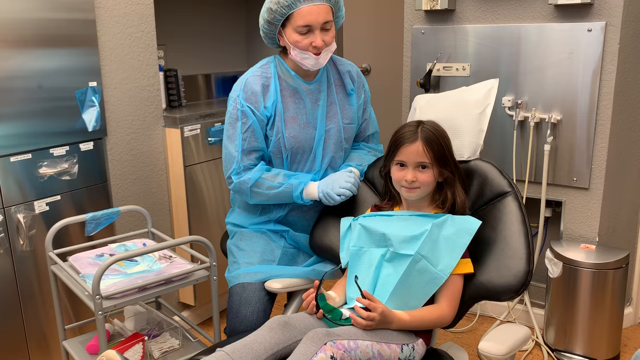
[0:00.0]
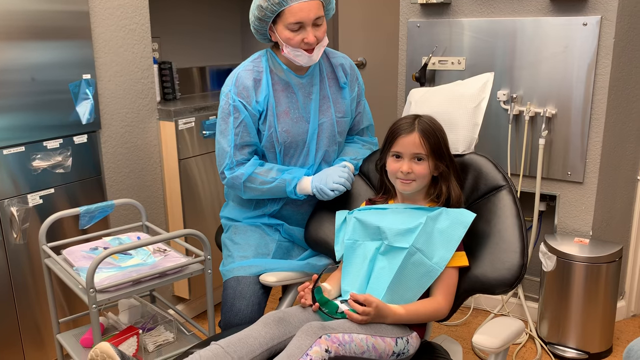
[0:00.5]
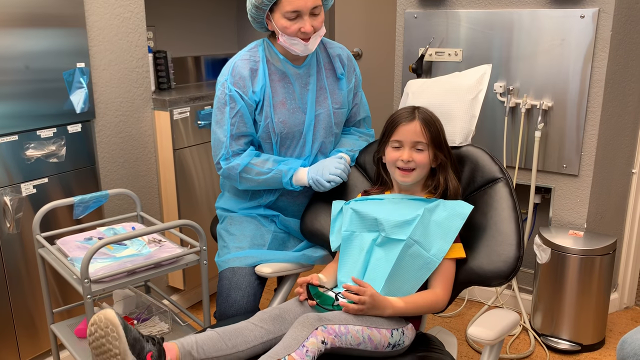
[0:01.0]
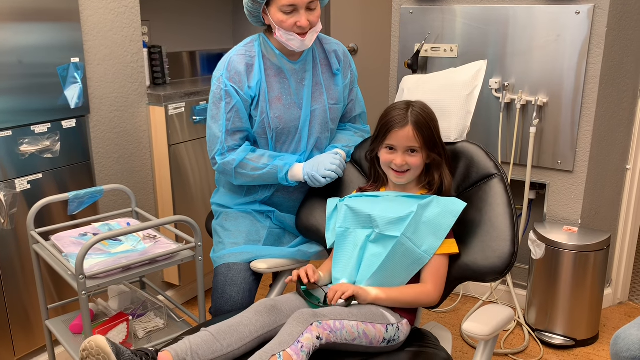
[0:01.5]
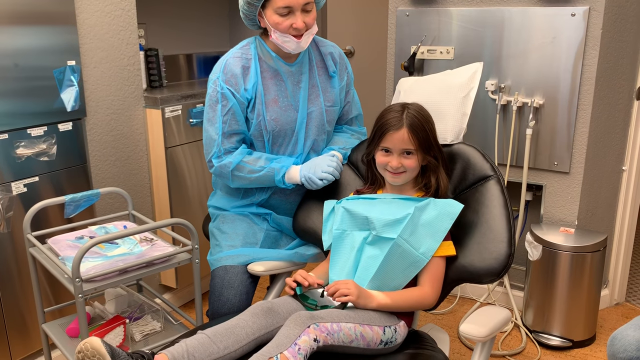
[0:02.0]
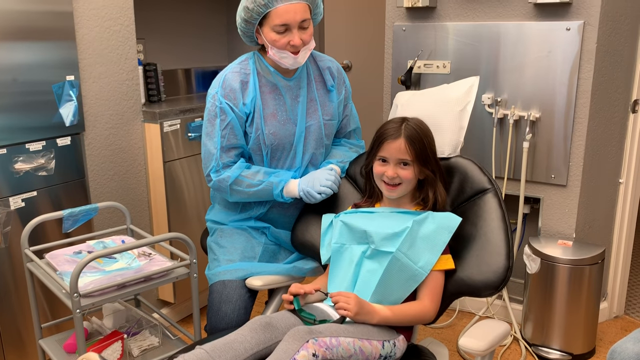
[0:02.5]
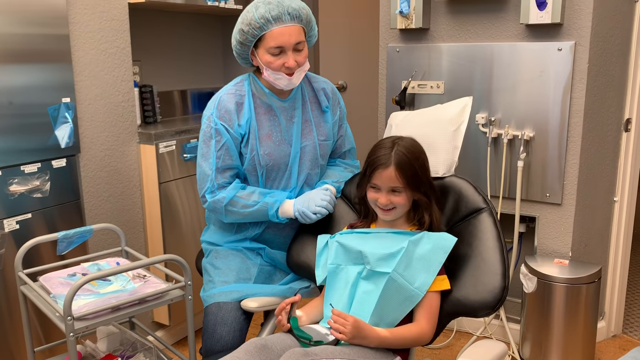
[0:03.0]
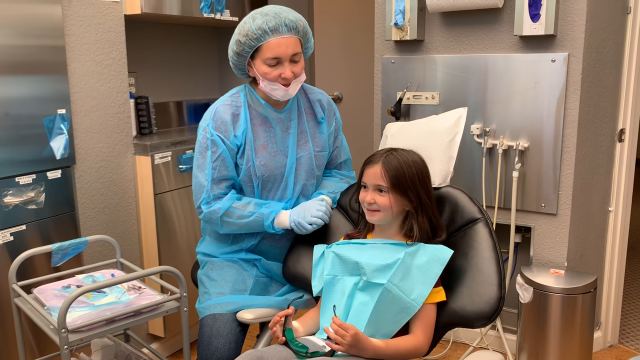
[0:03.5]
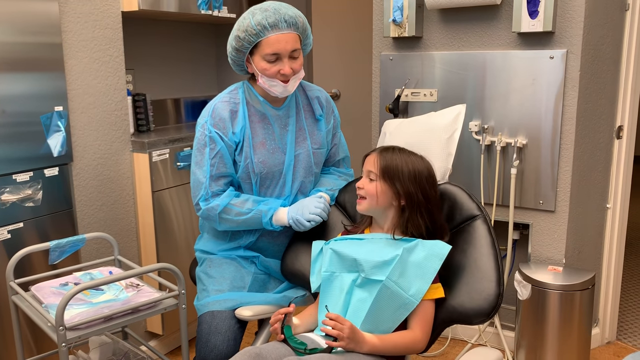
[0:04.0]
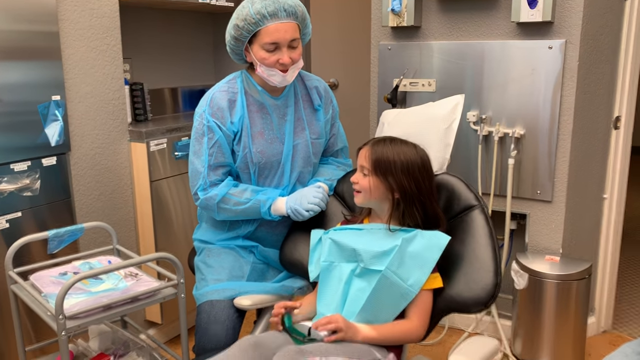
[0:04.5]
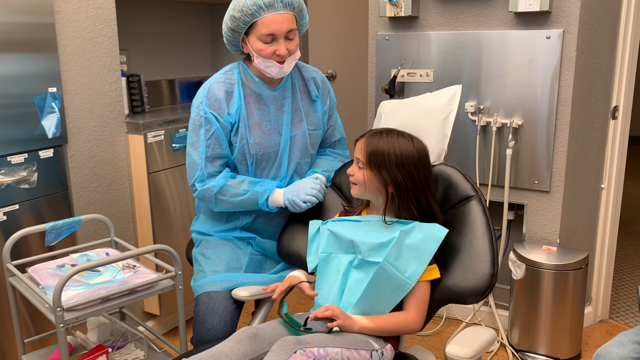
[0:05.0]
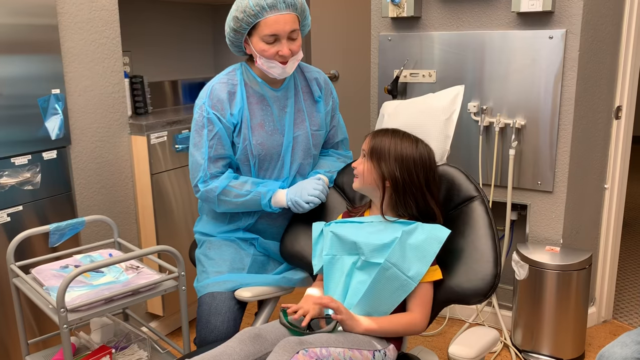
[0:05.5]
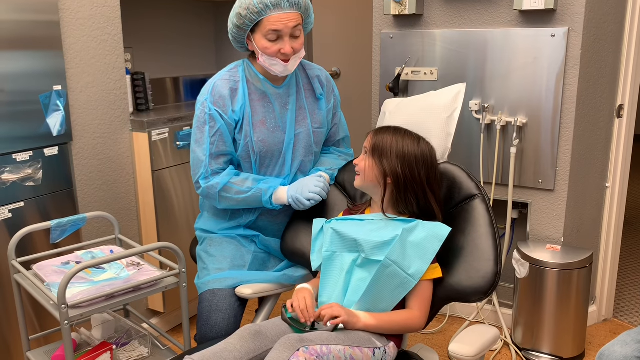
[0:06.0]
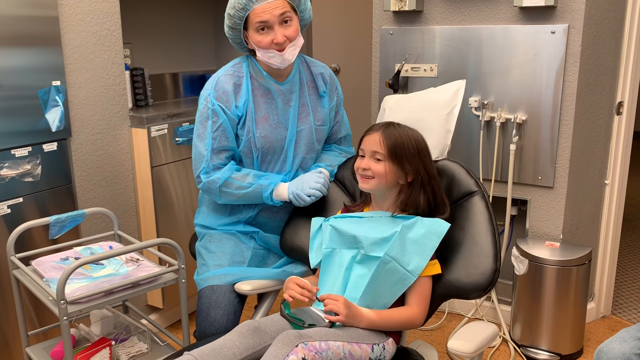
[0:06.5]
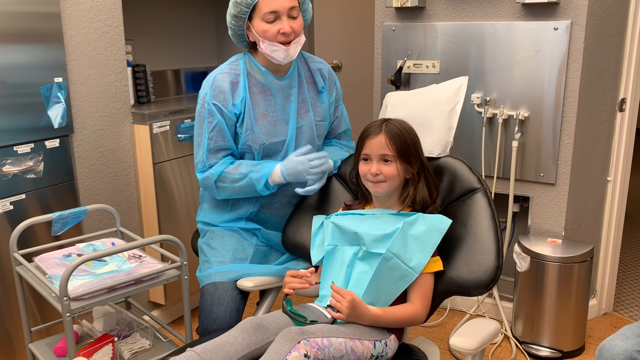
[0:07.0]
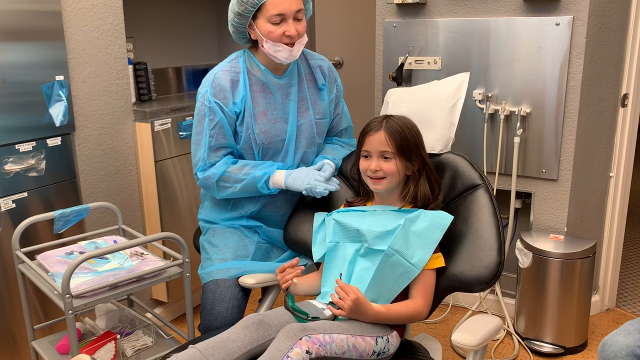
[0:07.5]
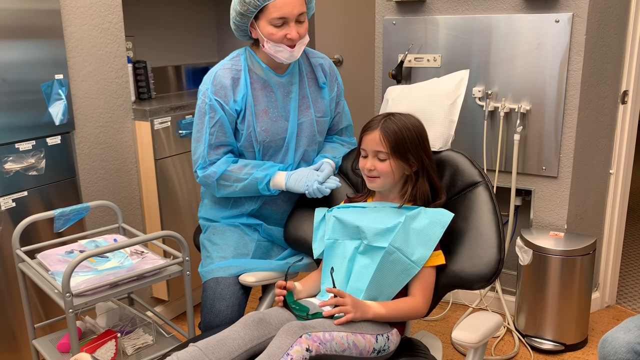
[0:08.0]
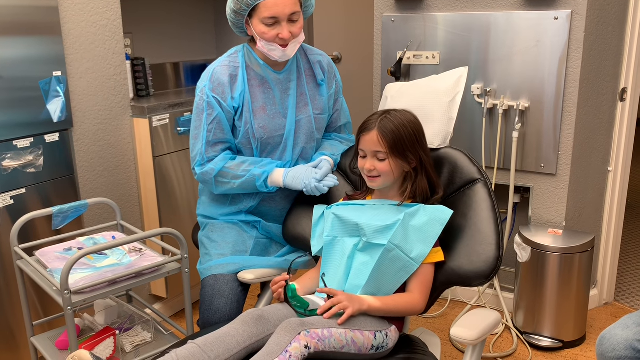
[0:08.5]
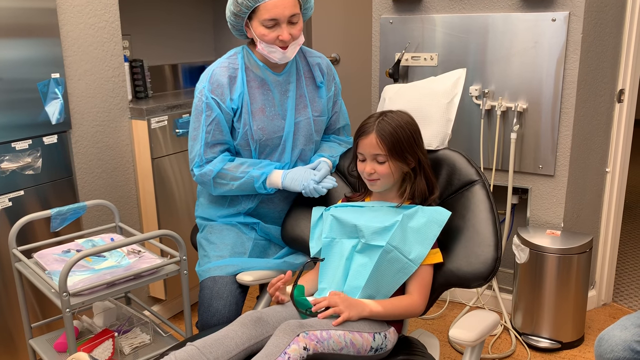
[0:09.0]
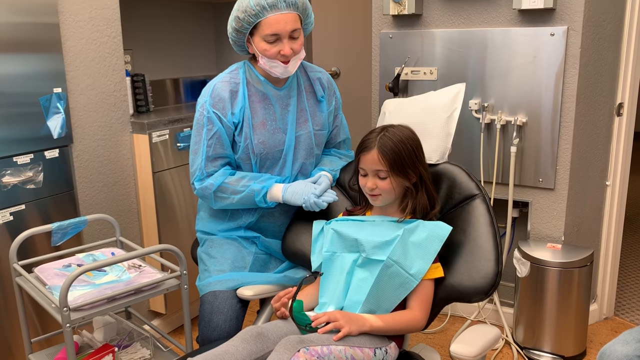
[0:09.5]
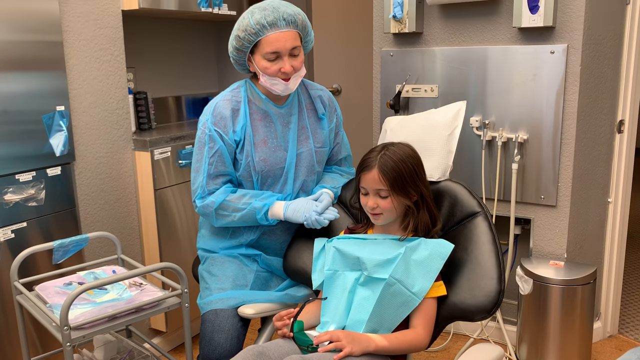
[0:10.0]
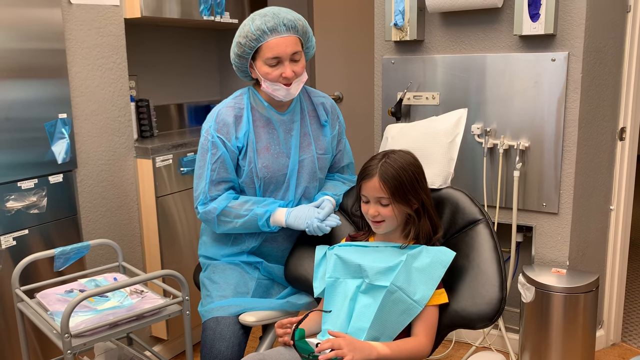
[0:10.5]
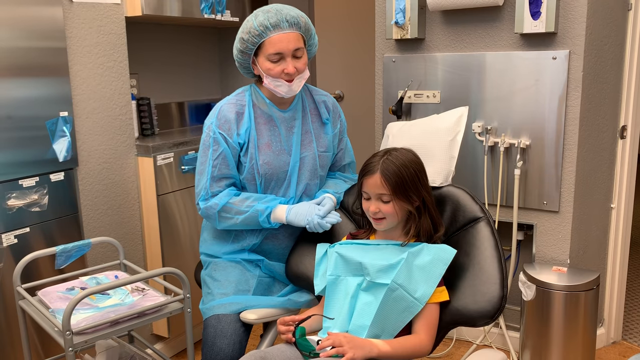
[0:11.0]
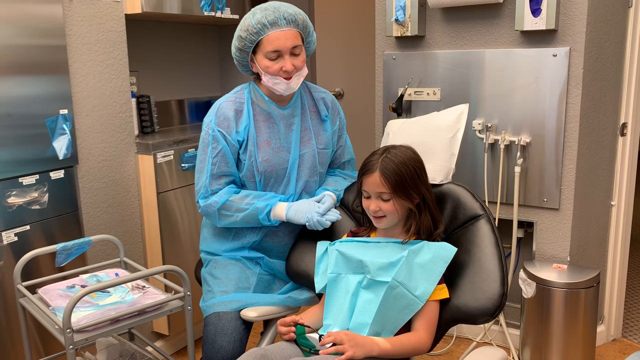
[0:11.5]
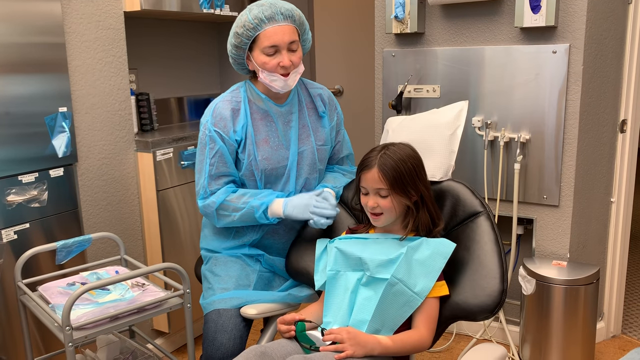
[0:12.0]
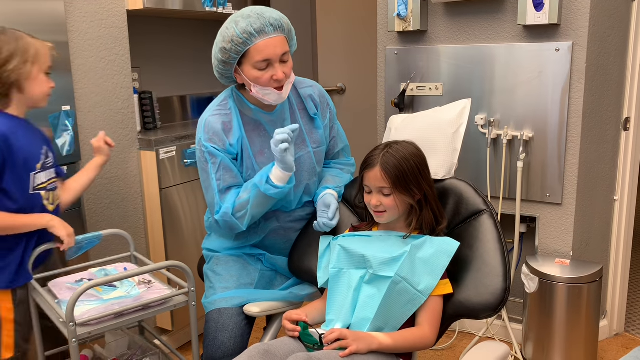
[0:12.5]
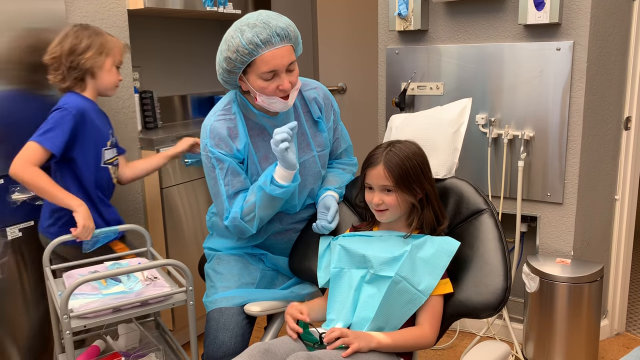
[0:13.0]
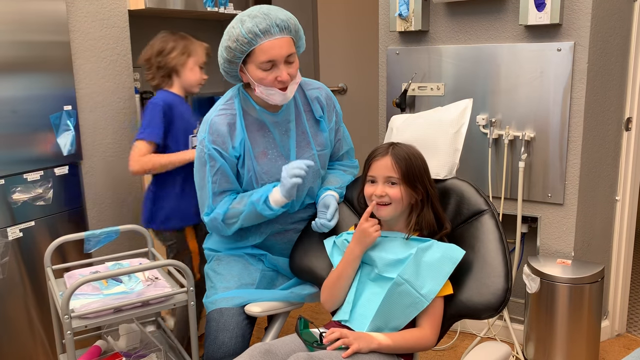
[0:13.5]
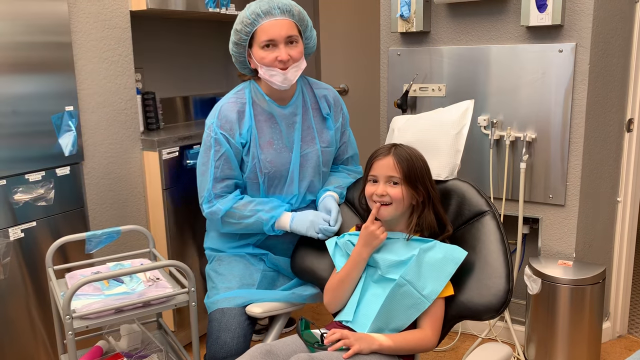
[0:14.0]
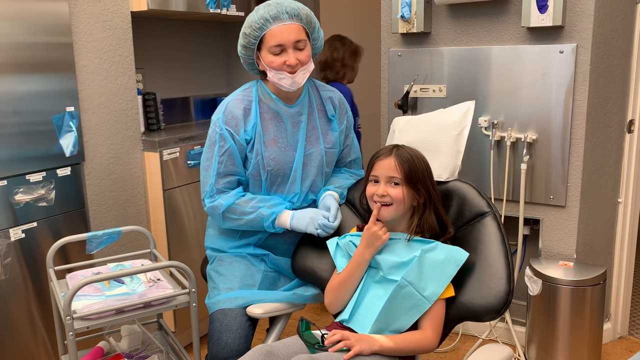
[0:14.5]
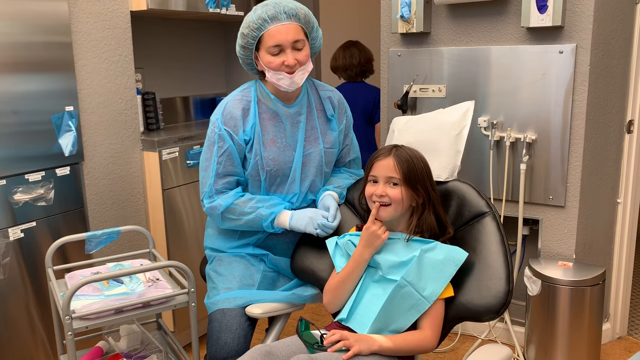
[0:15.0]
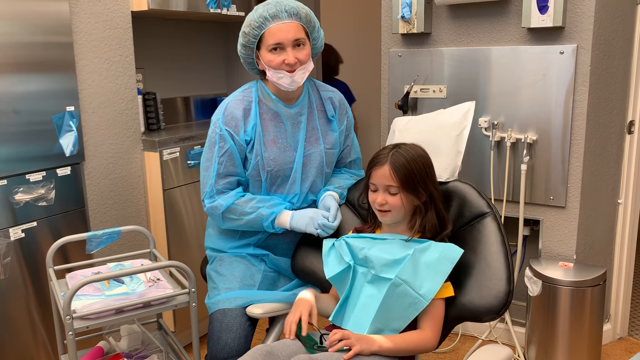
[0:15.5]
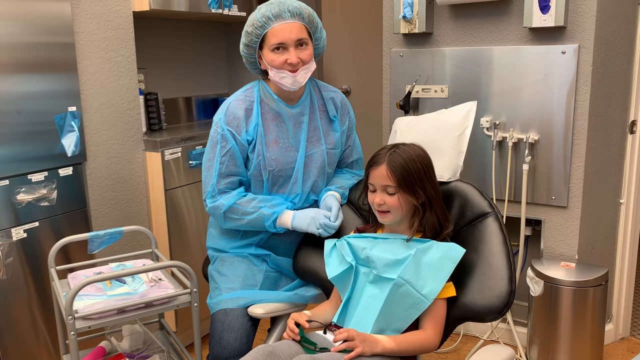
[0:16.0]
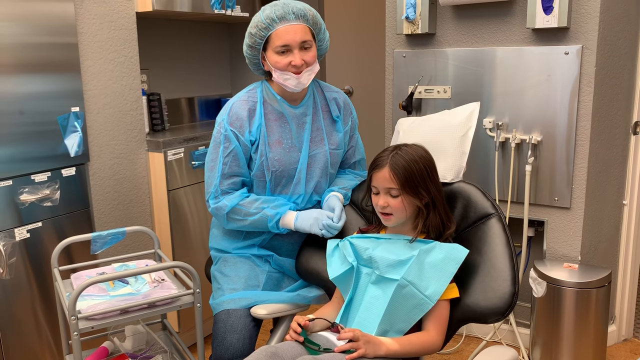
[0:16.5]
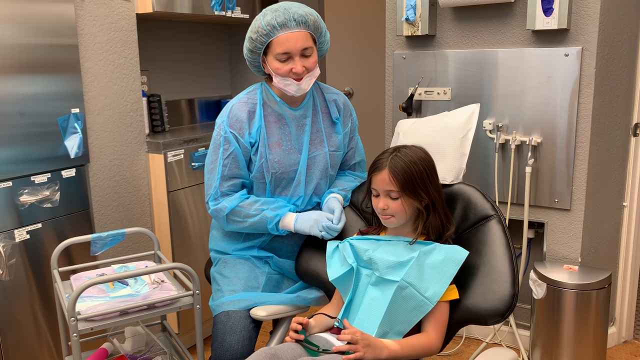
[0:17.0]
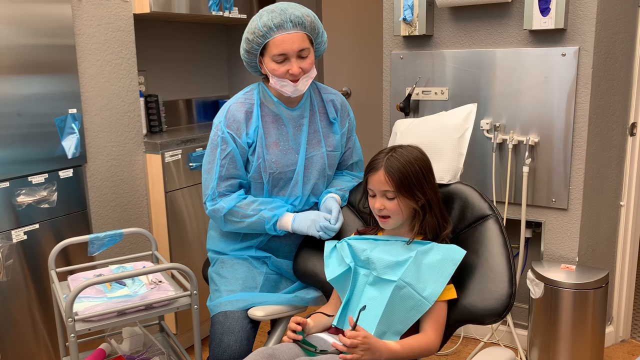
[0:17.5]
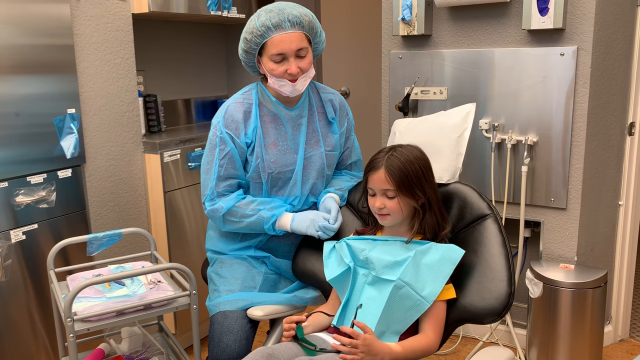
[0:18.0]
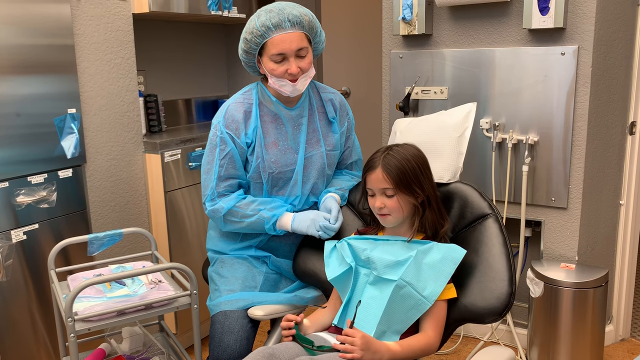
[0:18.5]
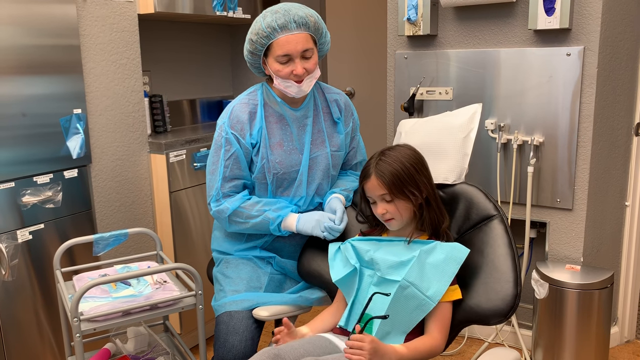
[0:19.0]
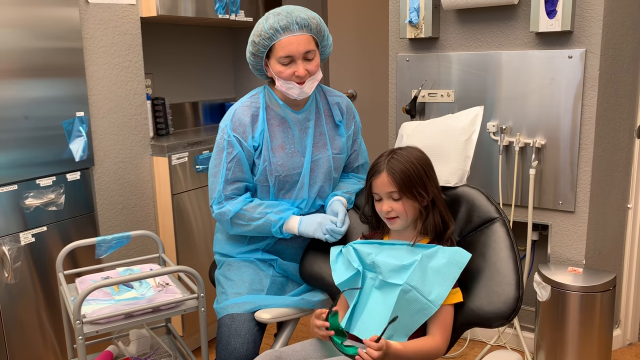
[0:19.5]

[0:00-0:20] A little girl with brown hair sits in a dentist chair in a dentist's exam room, with the dentist to her left, standing and looking down at her. The dentist wears a light blue gown over their clothes, a light blue hairnet, a white face mask and gloves. The girl looks up at the dentist. A blue protective paper or tissue paper covers her shirt and chest, her whole top area. She holds what looks like sunglasses in her hands and looks down at them. In the background, a little boy comes in from the left side and walks through the center. To the left, some dental instruments are on a little cart, and in the right corner there is a silver trash can.